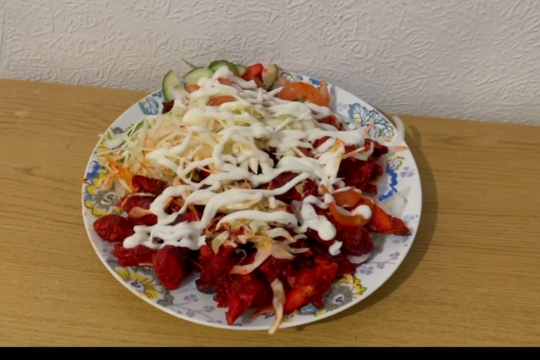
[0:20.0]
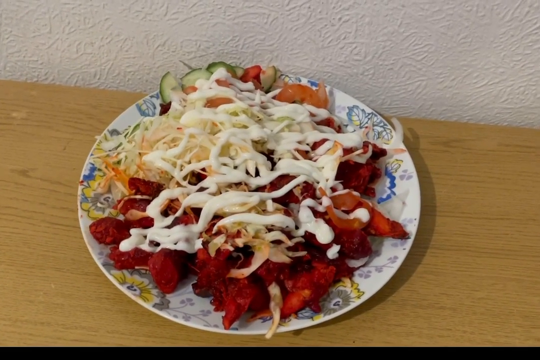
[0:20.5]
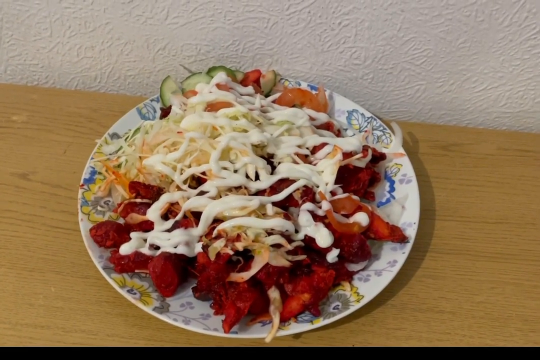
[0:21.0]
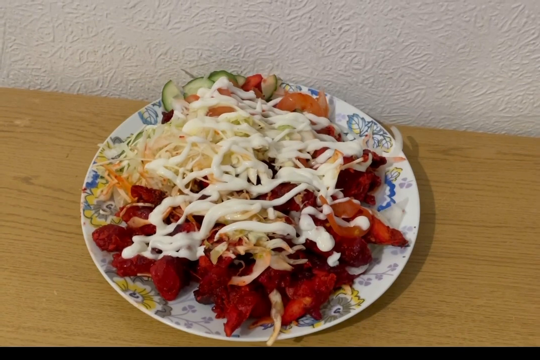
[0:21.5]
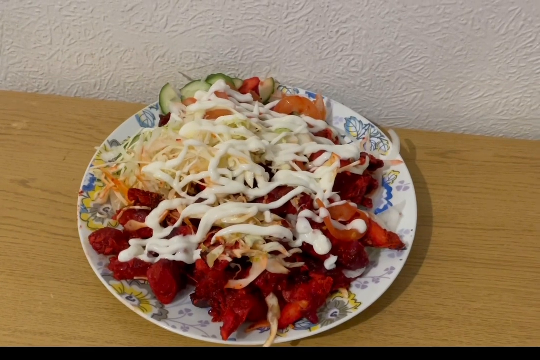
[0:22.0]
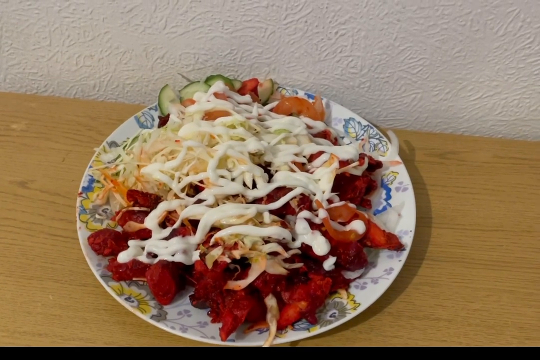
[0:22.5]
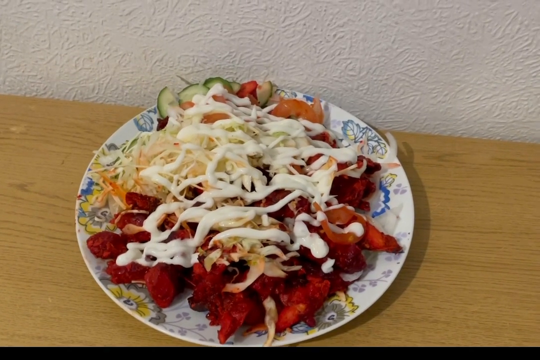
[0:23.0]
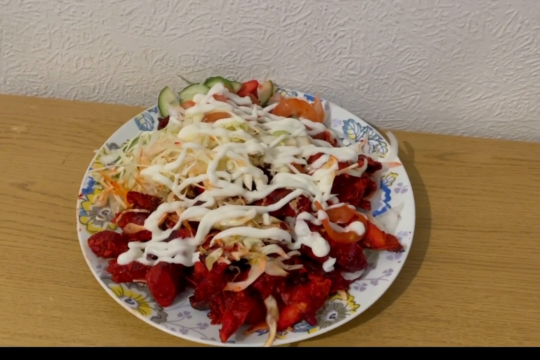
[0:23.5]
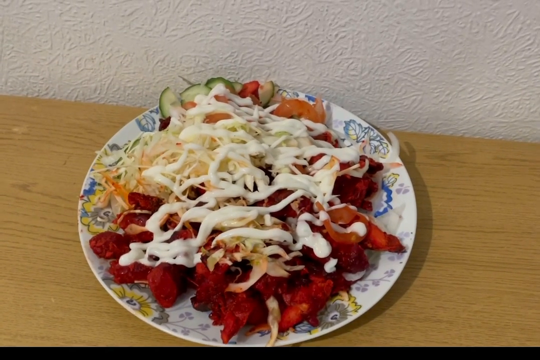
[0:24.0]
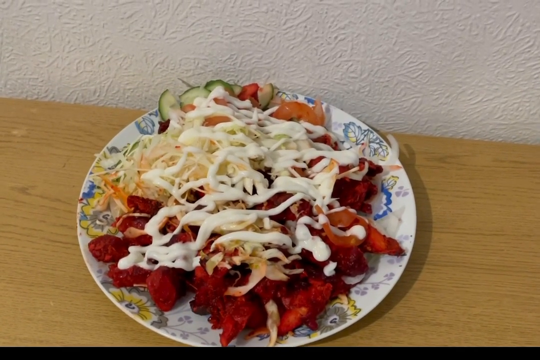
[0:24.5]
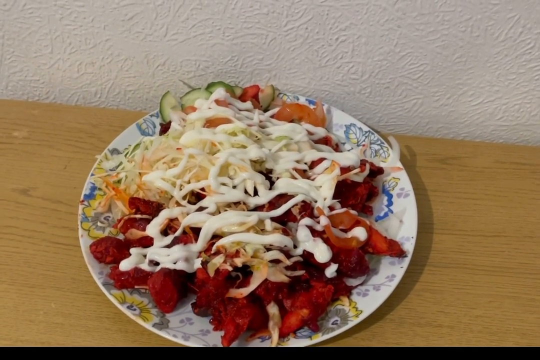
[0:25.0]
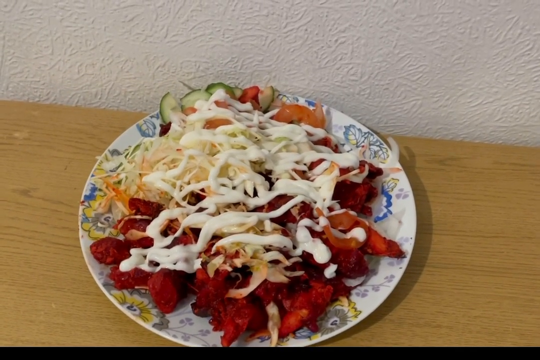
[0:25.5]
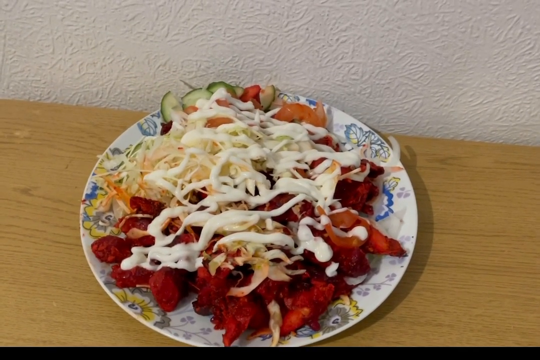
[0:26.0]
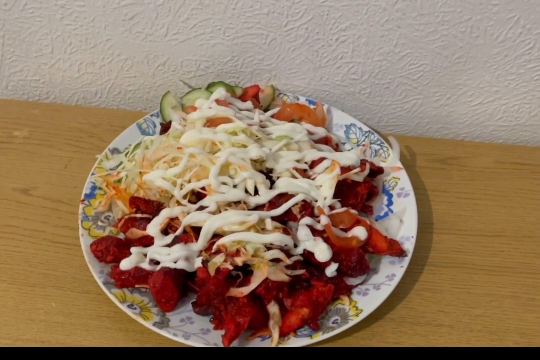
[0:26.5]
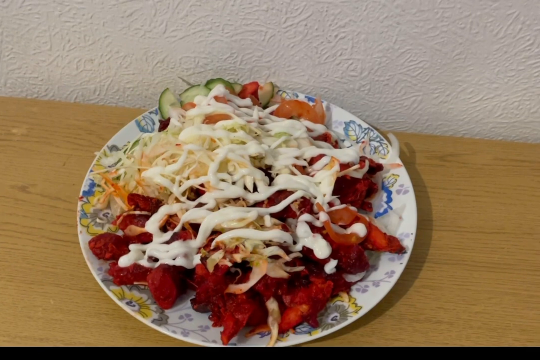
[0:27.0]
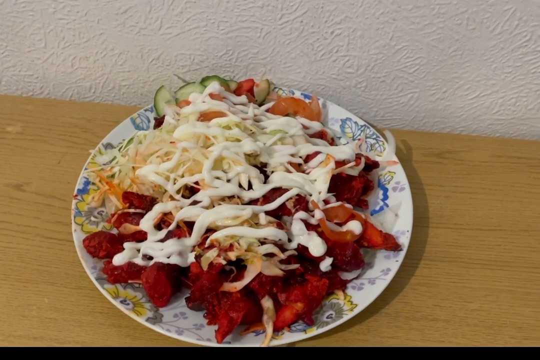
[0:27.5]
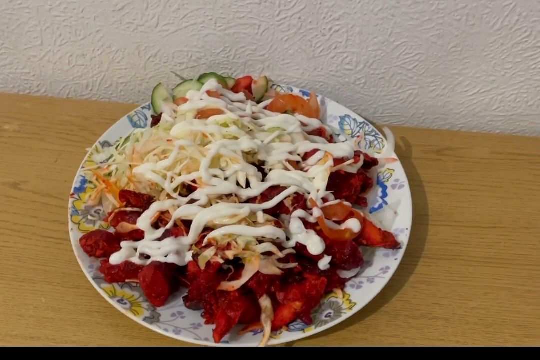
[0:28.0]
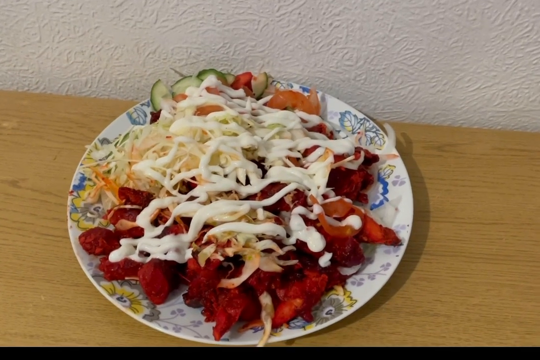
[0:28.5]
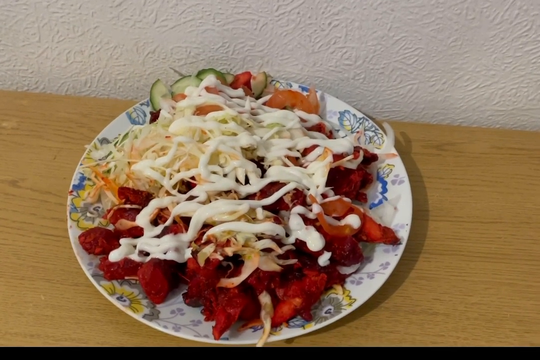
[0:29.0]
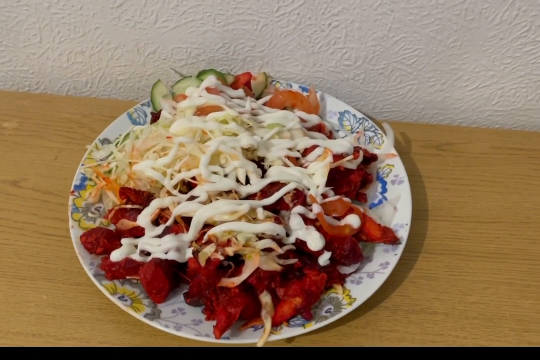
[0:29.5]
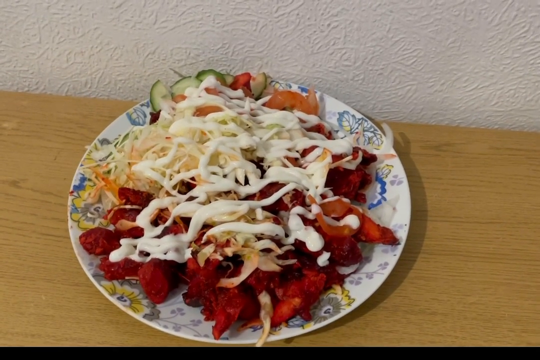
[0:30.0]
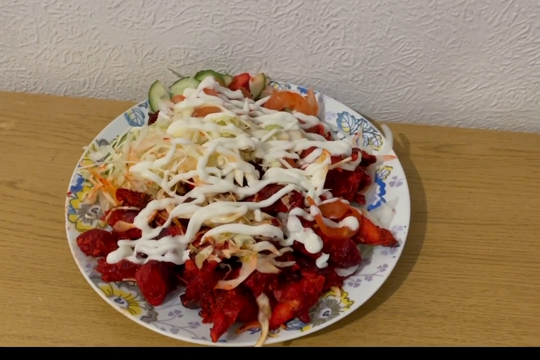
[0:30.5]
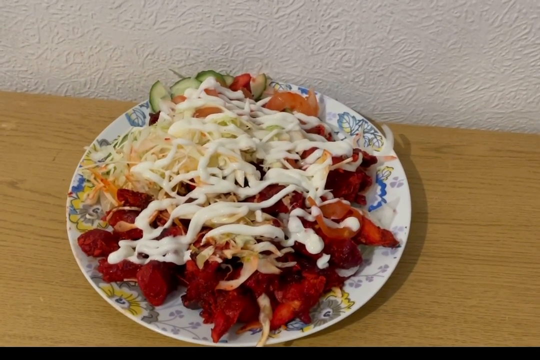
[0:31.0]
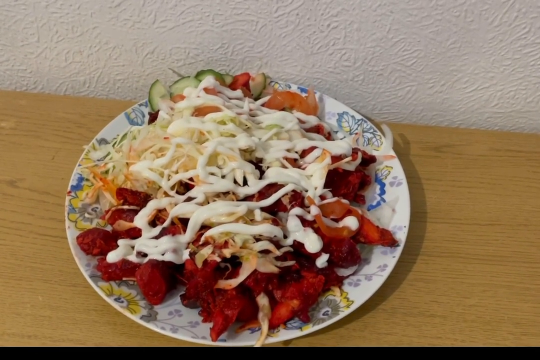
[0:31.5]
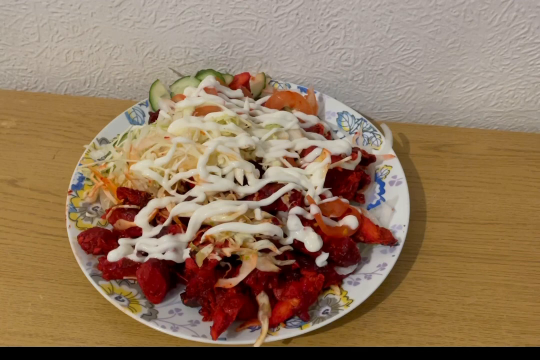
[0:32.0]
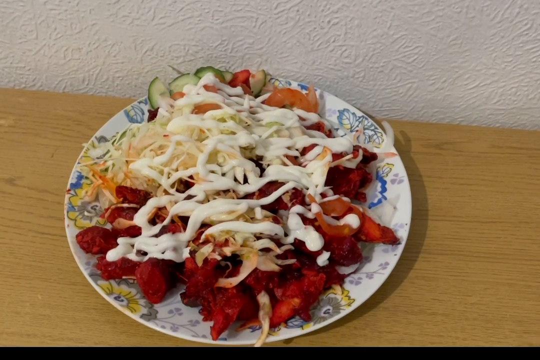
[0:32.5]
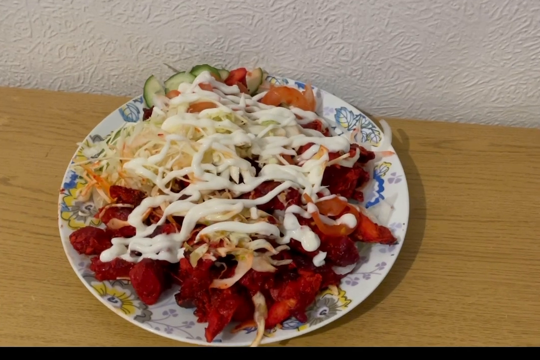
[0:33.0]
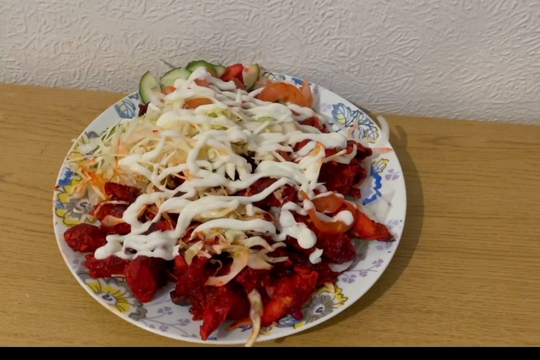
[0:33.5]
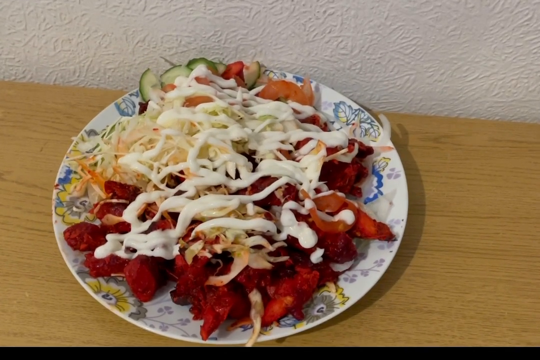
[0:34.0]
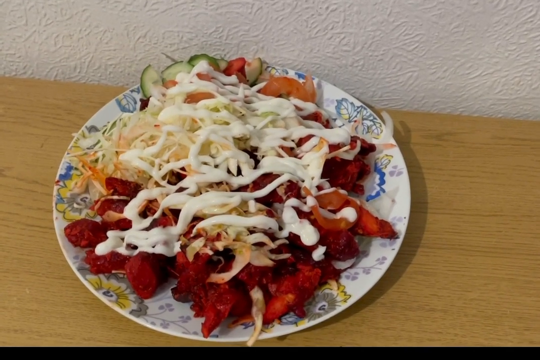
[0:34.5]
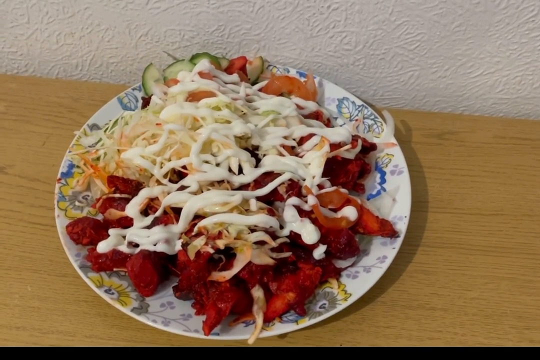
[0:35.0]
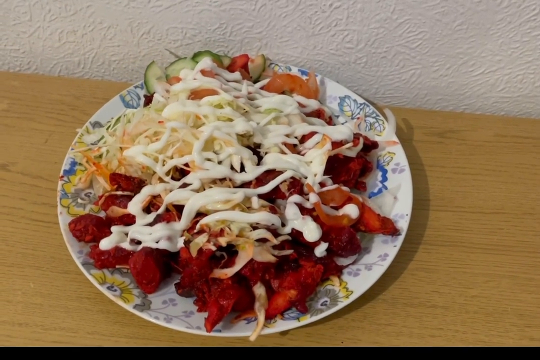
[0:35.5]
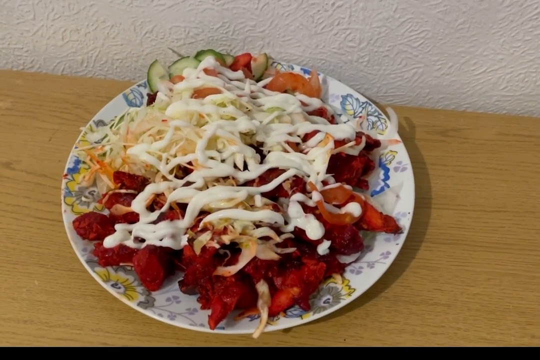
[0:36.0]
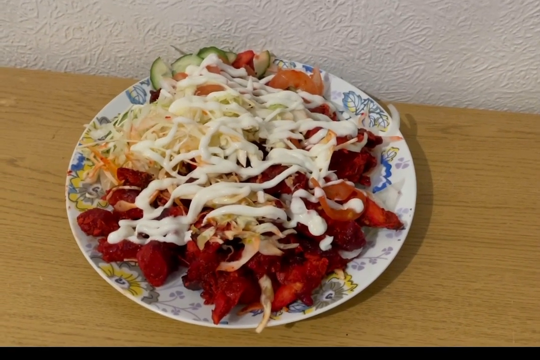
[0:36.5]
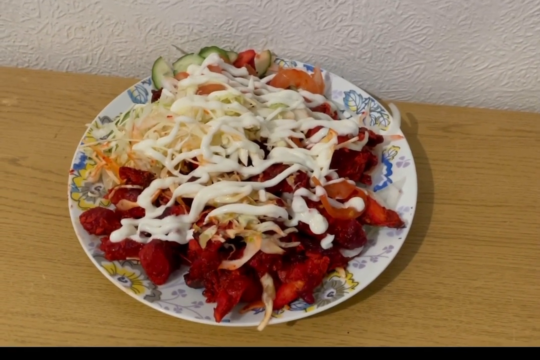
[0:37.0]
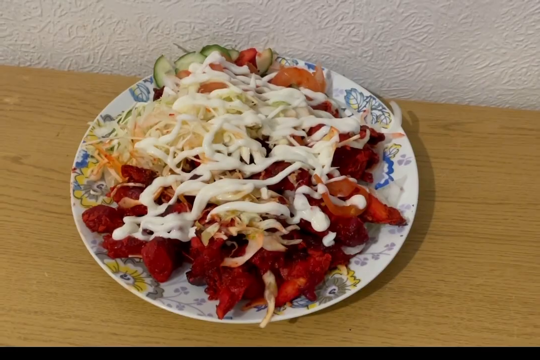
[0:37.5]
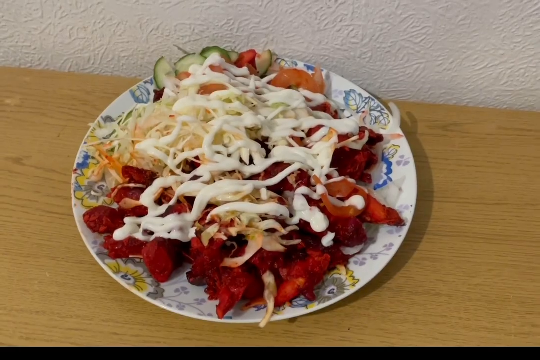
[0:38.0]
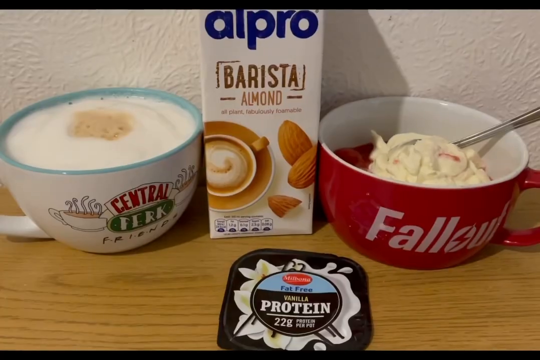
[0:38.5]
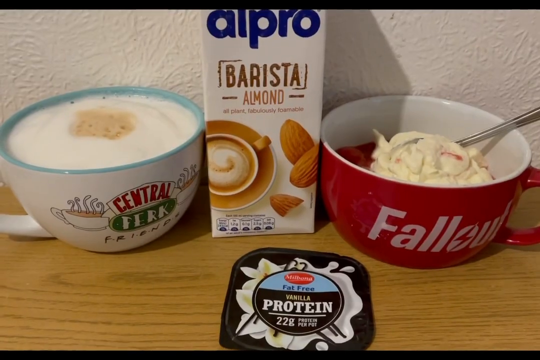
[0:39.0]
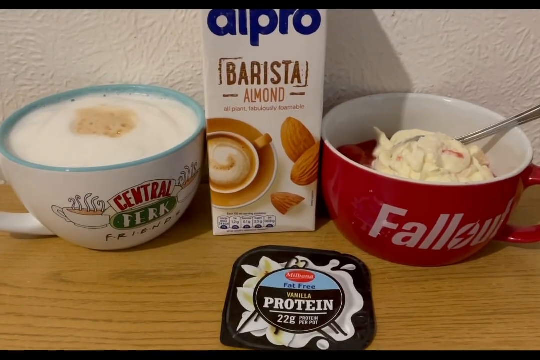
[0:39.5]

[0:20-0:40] The salad is on a ceramic plate with what is perhaps a floral pattern, and the plate is very full. In the foreground is the red meat-type substance; slightly above it are lots of bean sprouts, visible toward the top left of the plate, and then cucumber or maybe sliced tomato. The whole thing is smothered in what is perhaps low-fat mayonnaise. The camera hovers, and the plate appears to move, suggesting the camera is not held very steadily. The view then goes to another area of the work surface, where there is a red mug with "Fallout" on it. It has a red lightning flash, the text is white, the background of the mug is red and the inside of the mug is white. Inside is some sort of cream, with a spoon in the mug leaning against the rim. There is what looks like the top of a container with the text "fat-free vanilla protein" on it. Above that is a barista almond product, Alpro, apparently a substitute milk. On the left side is a Central Perk mug from Friends, as denoted by the text on the mug, and inside it is some sort of foamy drink.